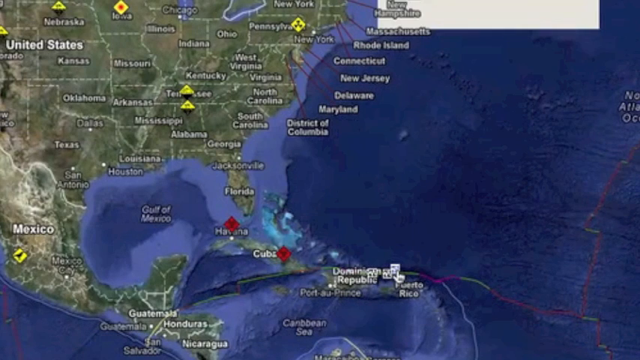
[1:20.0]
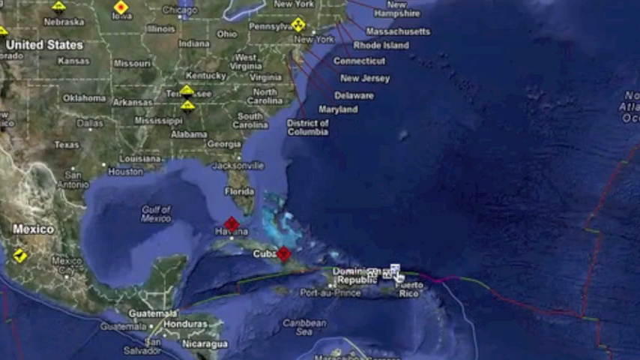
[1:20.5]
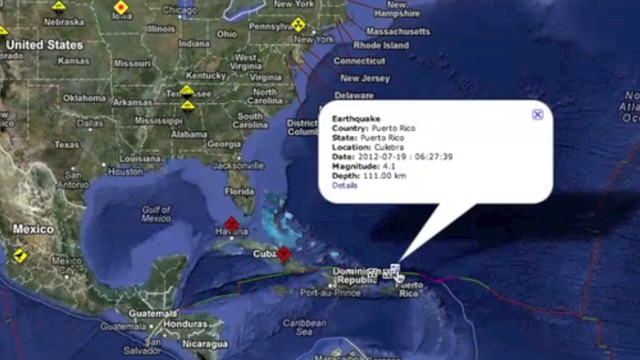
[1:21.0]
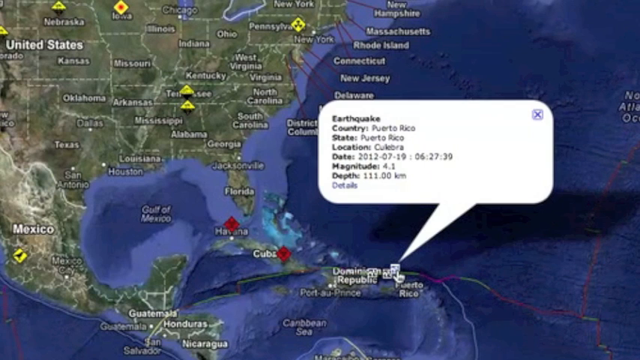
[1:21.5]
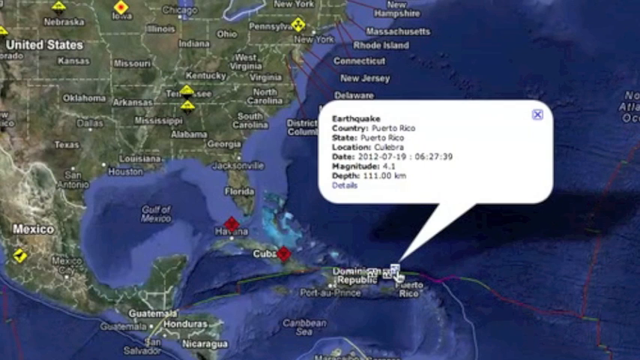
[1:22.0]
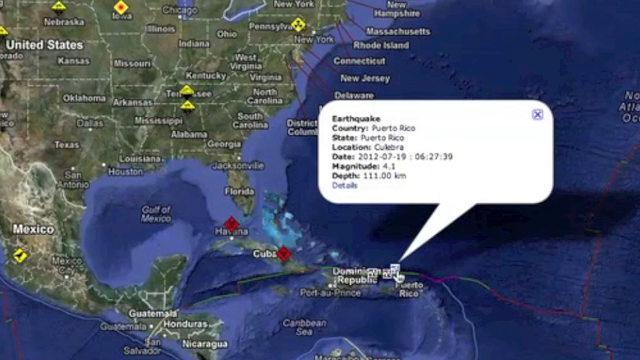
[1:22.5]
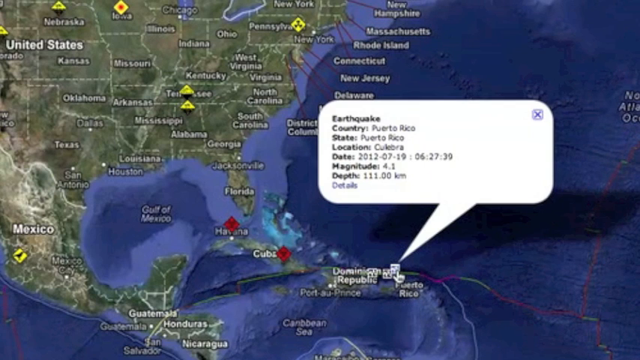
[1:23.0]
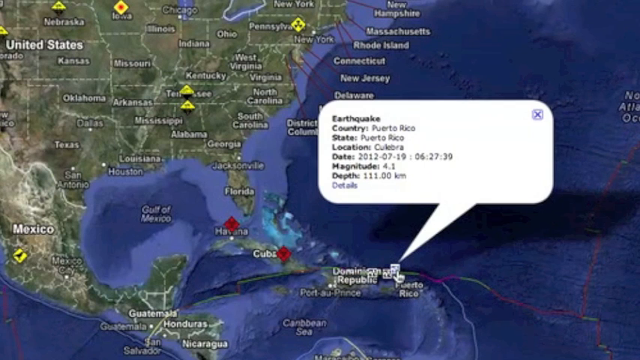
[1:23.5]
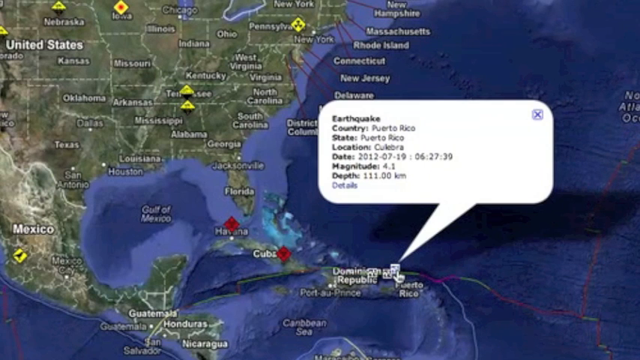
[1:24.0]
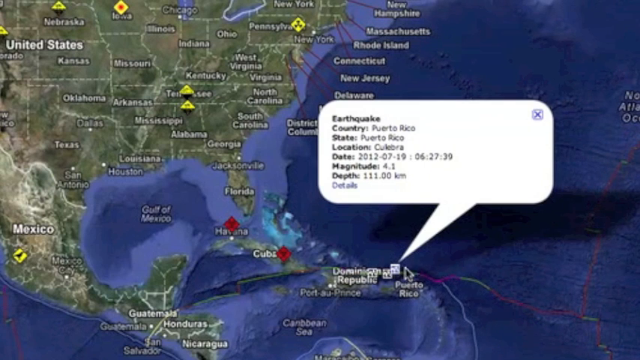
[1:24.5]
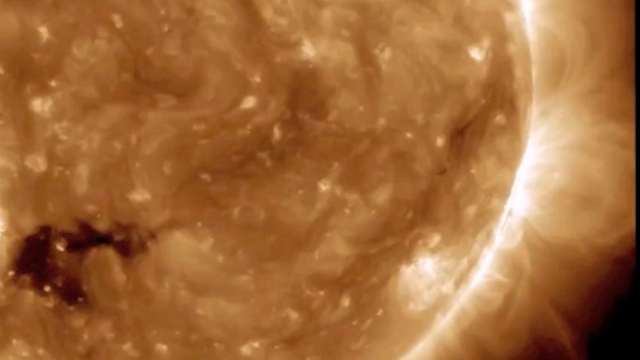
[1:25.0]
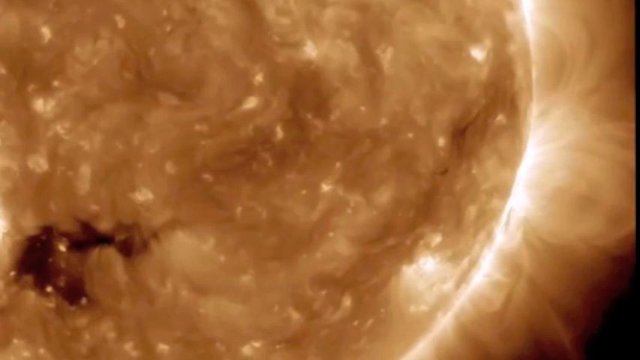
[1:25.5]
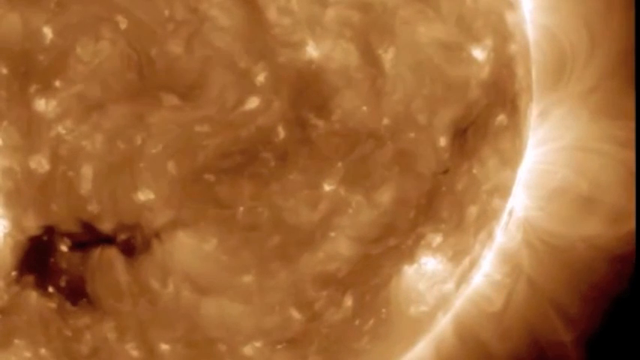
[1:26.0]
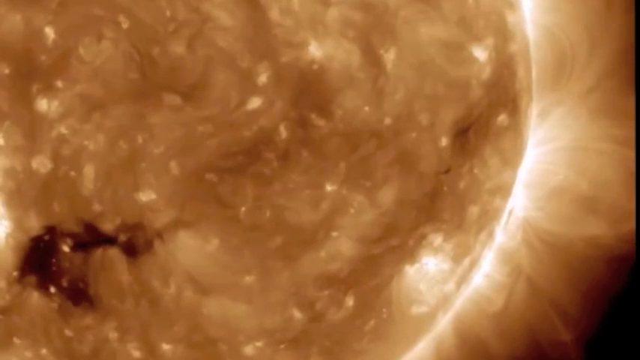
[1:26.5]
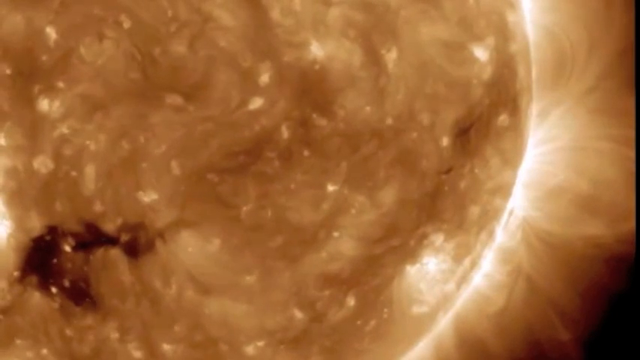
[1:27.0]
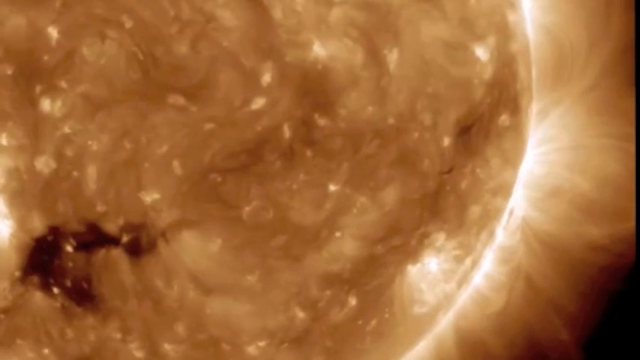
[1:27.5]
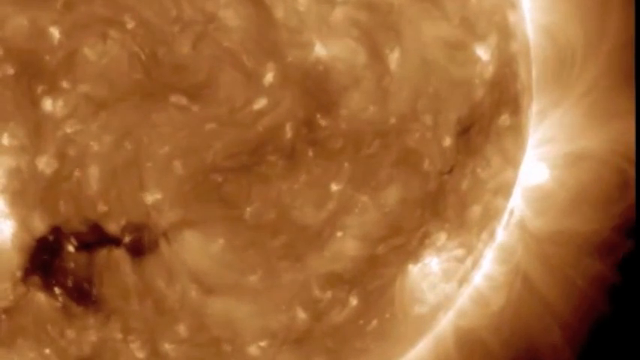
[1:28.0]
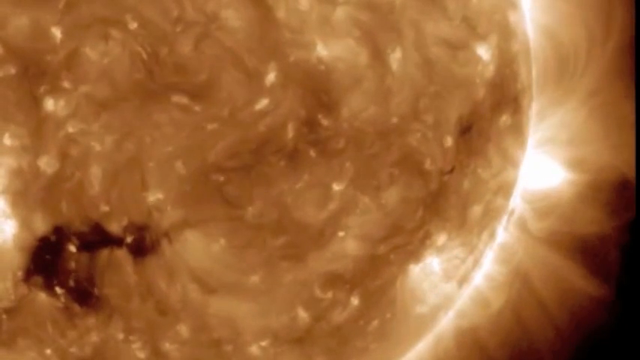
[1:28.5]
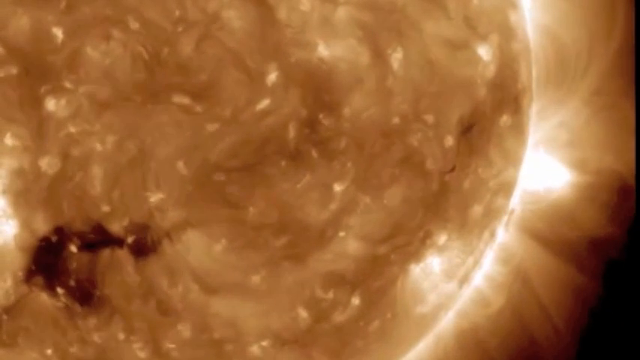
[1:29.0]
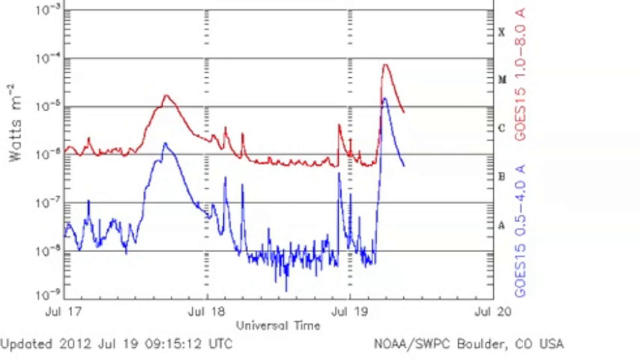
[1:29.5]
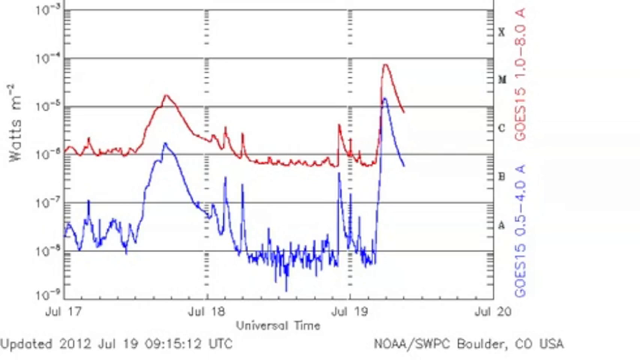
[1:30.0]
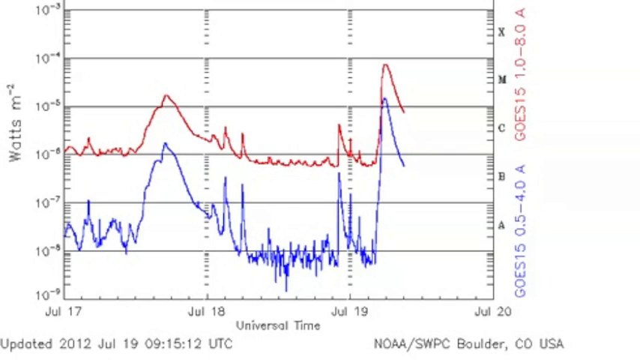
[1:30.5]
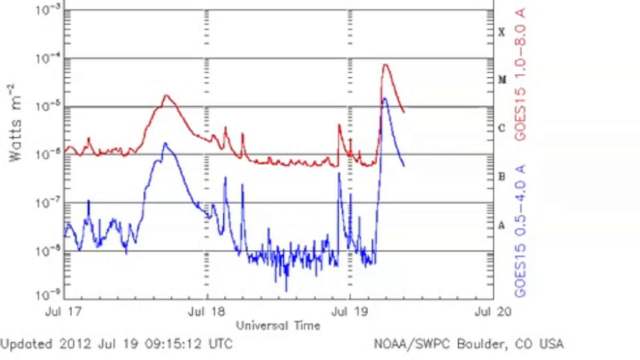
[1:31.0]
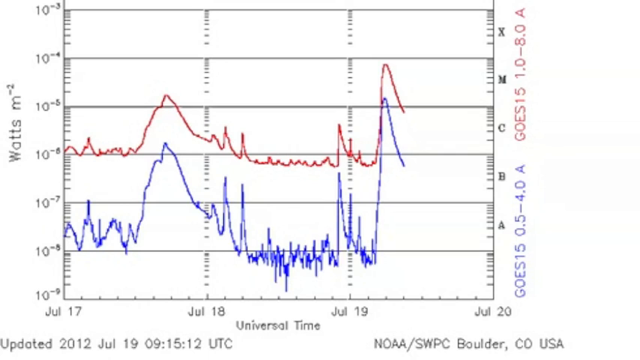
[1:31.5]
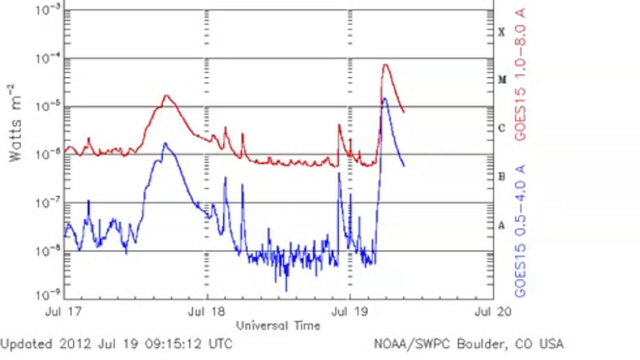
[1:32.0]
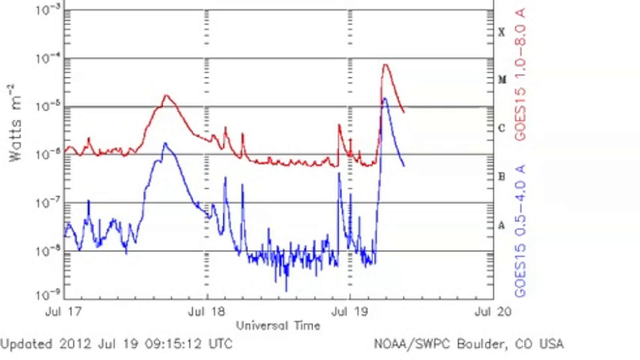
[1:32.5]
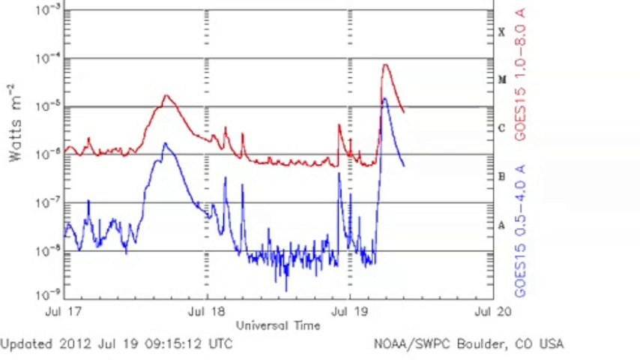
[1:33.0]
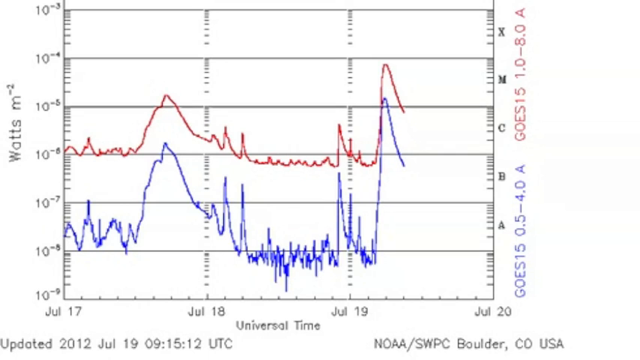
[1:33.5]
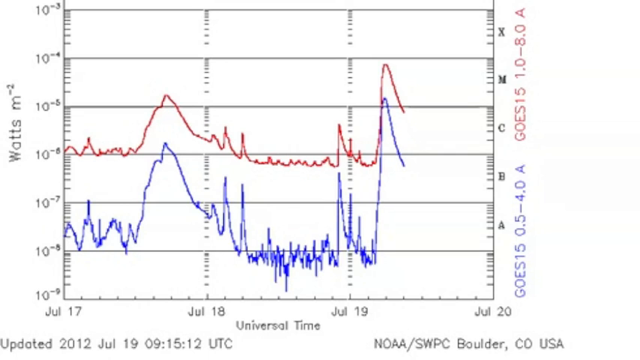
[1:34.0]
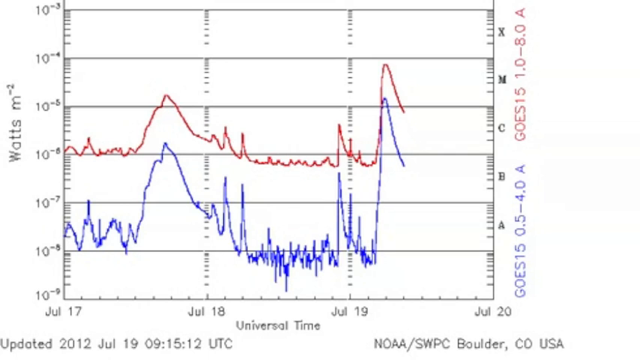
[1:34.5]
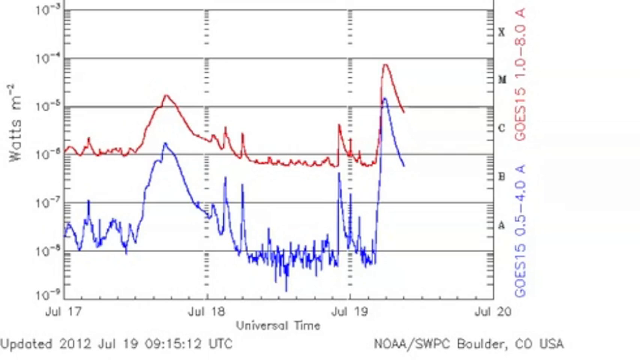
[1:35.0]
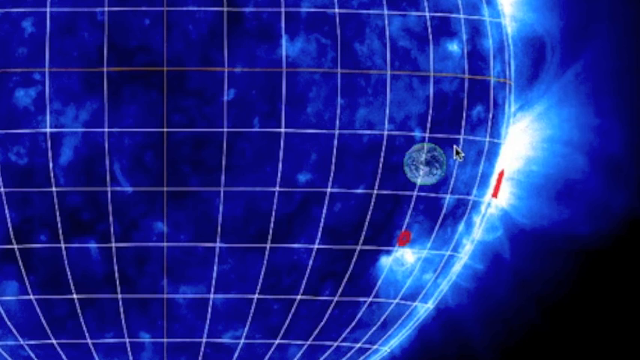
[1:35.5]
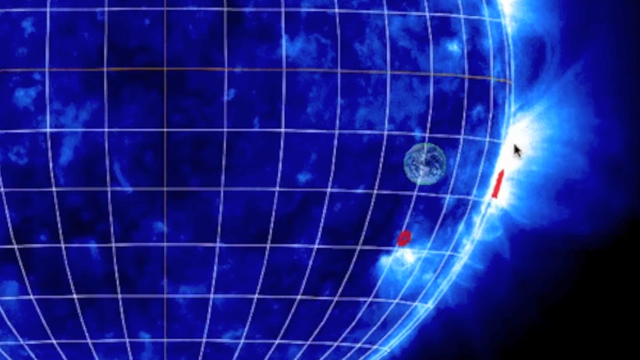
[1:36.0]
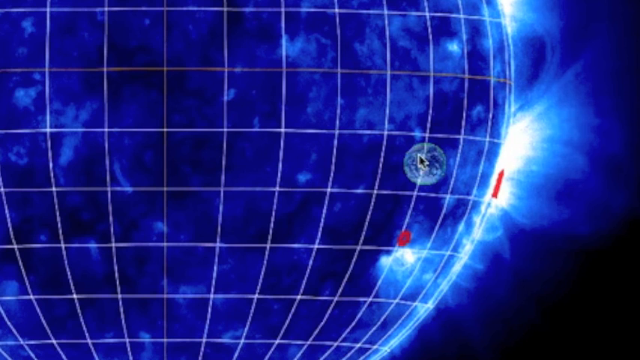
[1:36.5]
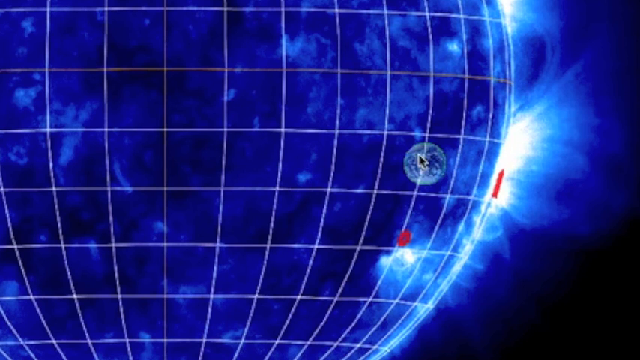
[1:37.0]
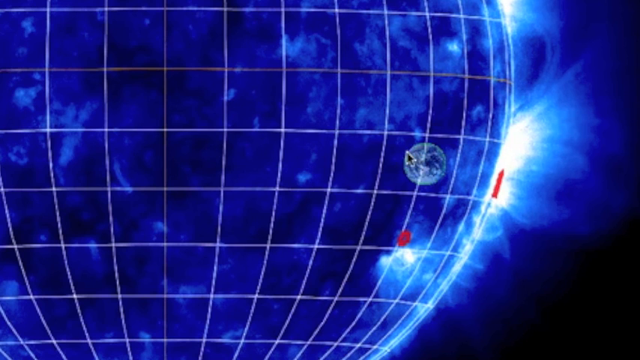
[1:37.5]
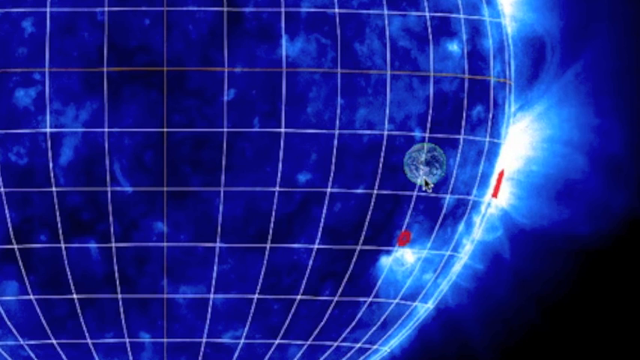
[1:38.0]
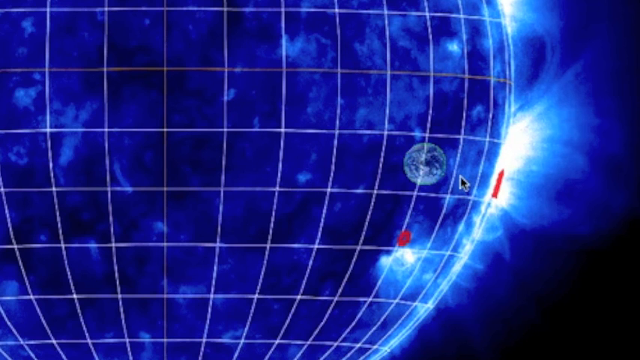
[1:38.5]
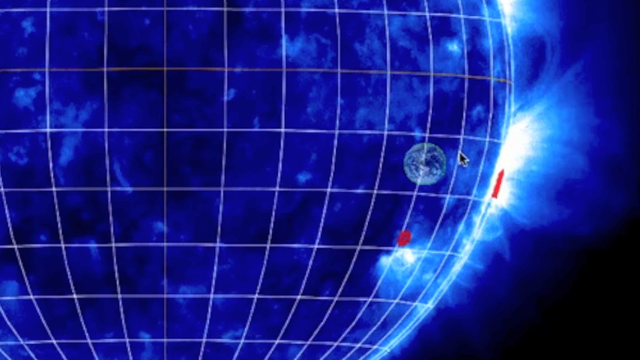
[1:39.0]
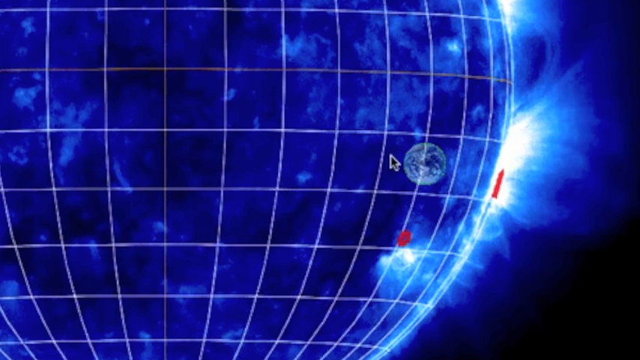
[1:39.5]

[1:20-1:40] The map is now more zoomed in, to probably the right 75% of the United States, with some of Mexico visible. A text box comes out of where Puerto Rico is, reading "Puerto Rico" and listing the location, the country, the state, a date that looks like "7-19-2012," "magnitude 4.1," "depth 111 kilometers," and details. The screen then changes to a close-up of a golden swirly pattern with a bright light coming out of its right side, almost like a sphere. Next comes a table with a red and a blue squiggly line, the red on top and the blue on the bottom; the left side reads "watts" and the bottom has dates, possibly showing seismic activity. The screen then changes to a spherical grid with a very small planet Earth on the right side, with red lines around it, and the cursor circling around the planet.